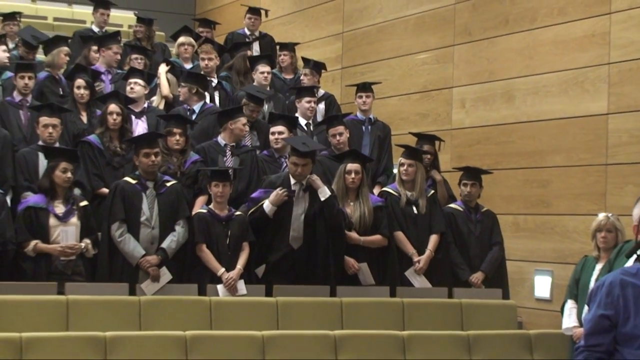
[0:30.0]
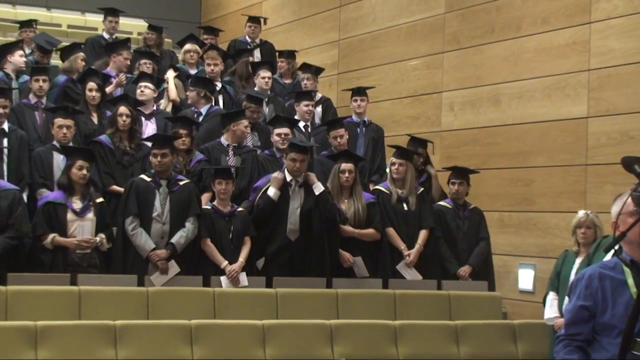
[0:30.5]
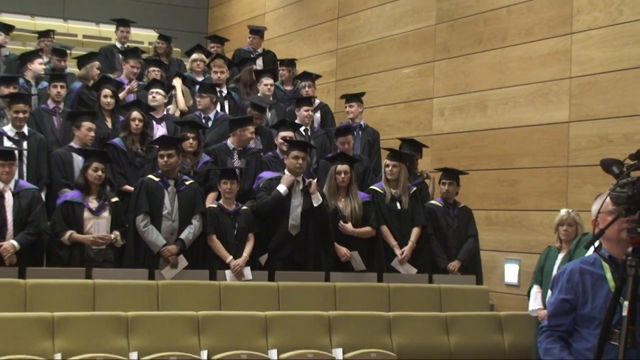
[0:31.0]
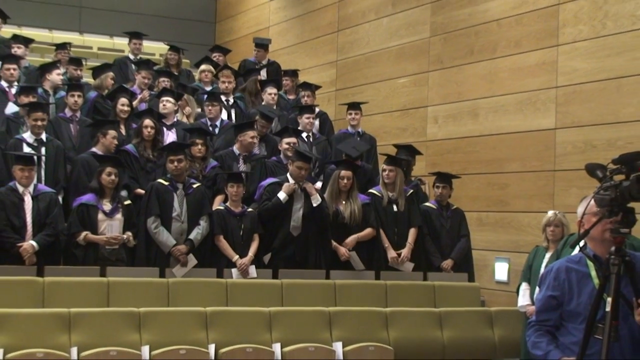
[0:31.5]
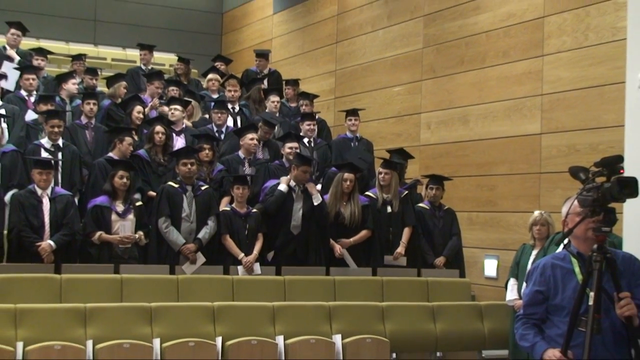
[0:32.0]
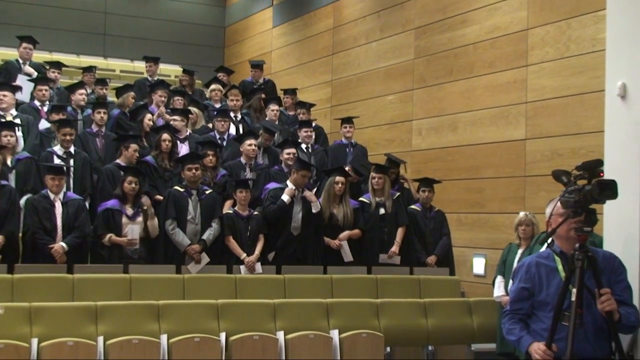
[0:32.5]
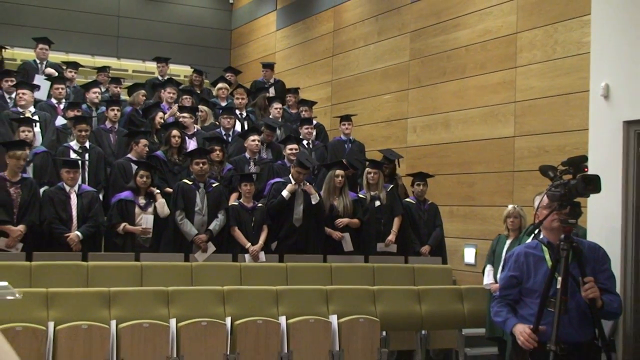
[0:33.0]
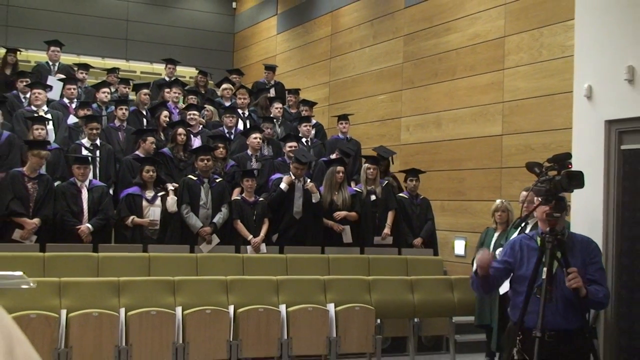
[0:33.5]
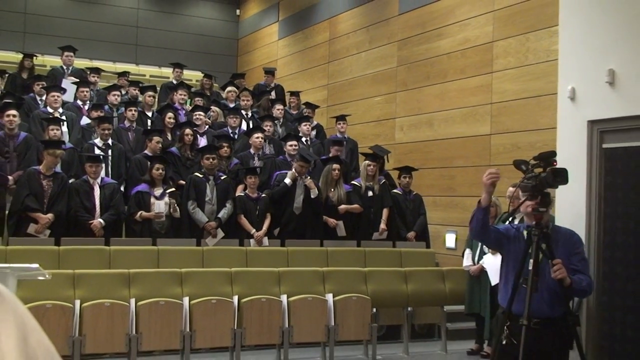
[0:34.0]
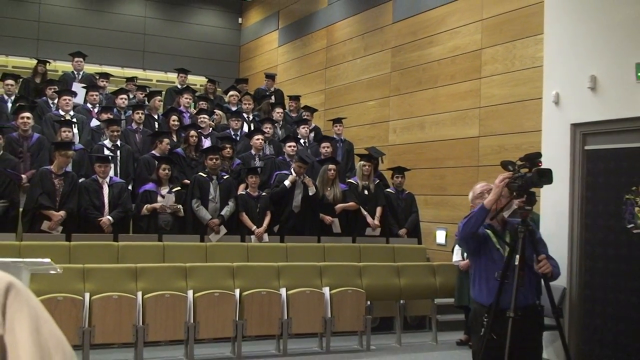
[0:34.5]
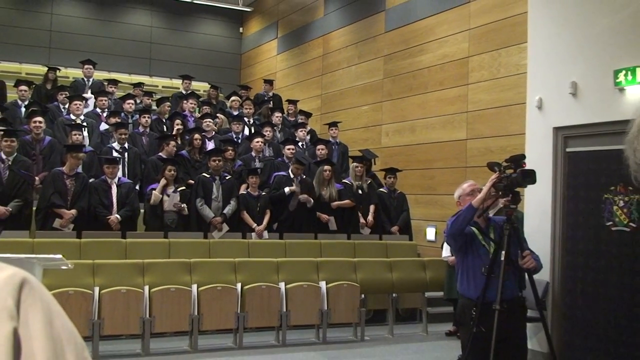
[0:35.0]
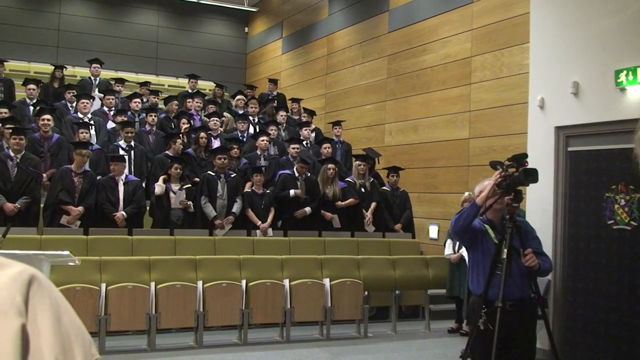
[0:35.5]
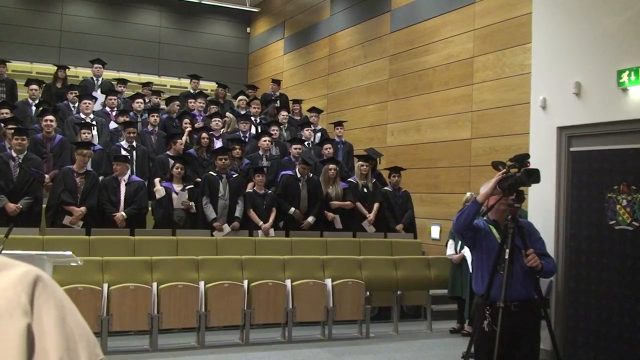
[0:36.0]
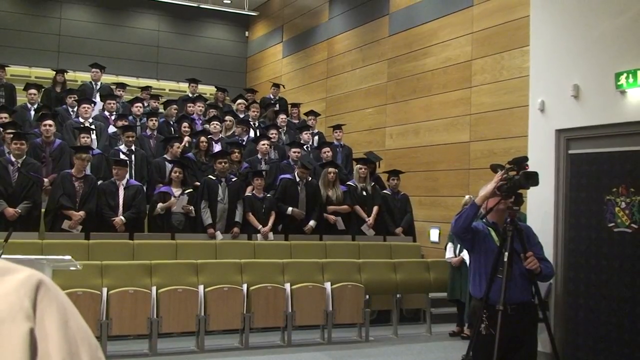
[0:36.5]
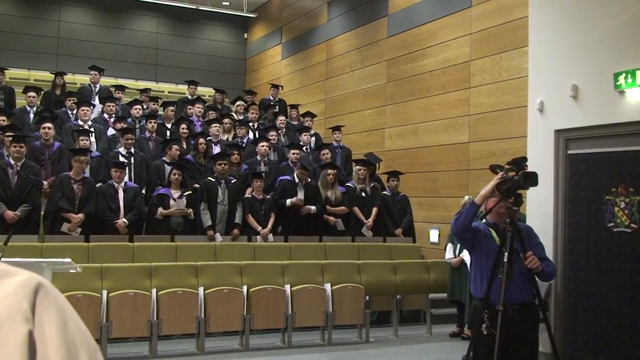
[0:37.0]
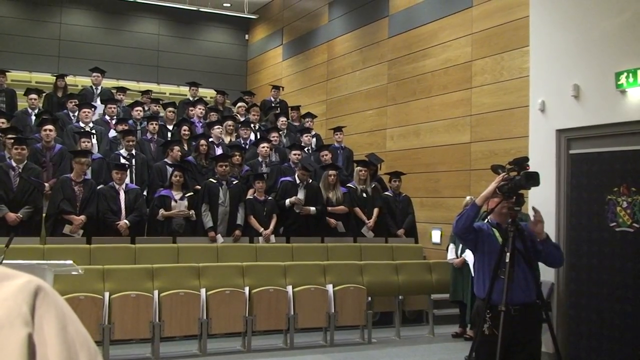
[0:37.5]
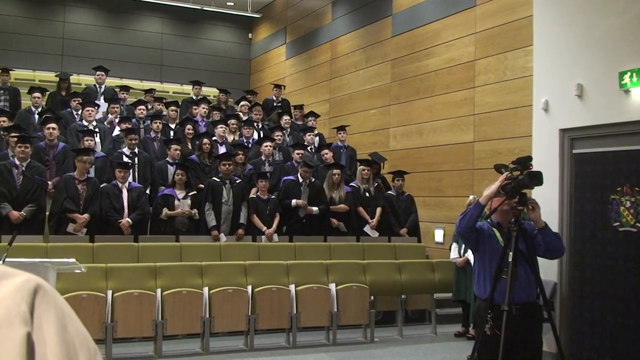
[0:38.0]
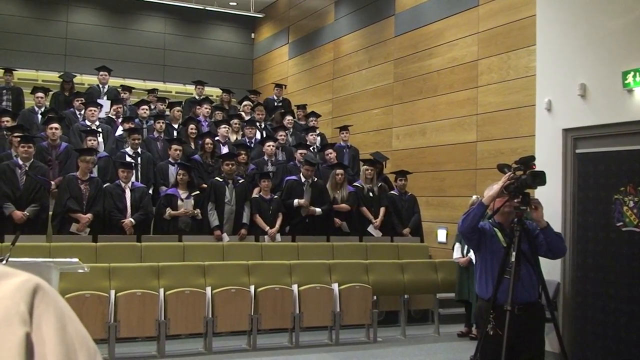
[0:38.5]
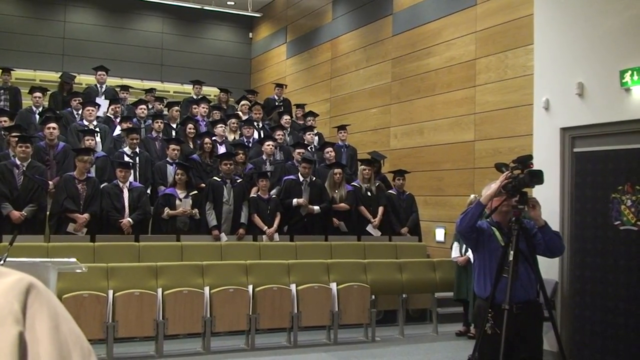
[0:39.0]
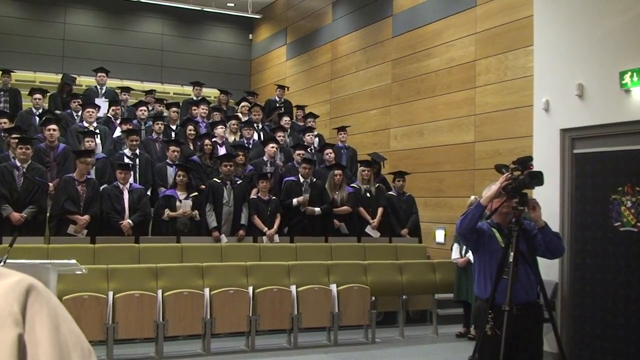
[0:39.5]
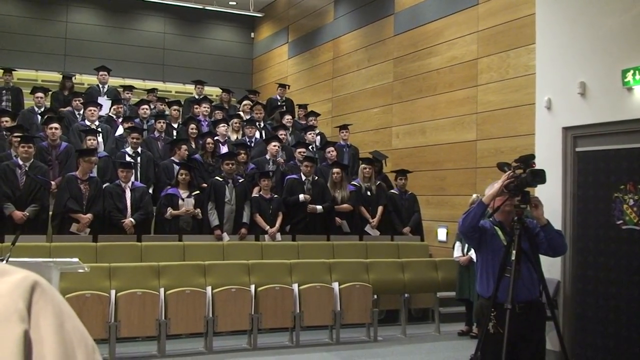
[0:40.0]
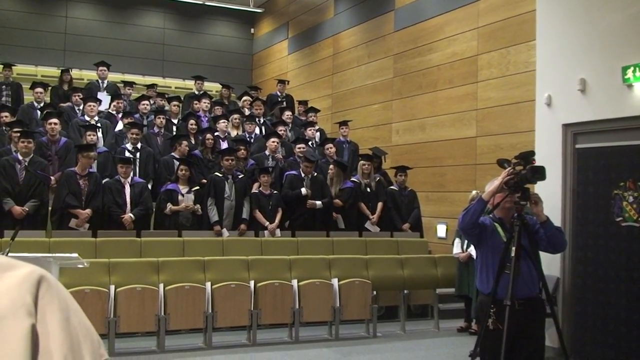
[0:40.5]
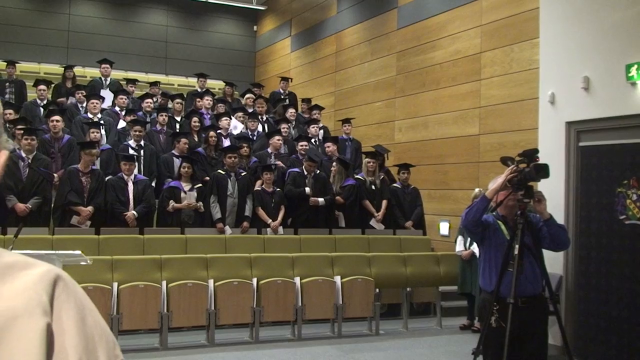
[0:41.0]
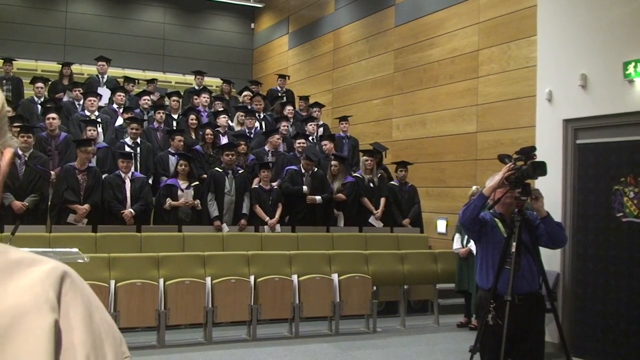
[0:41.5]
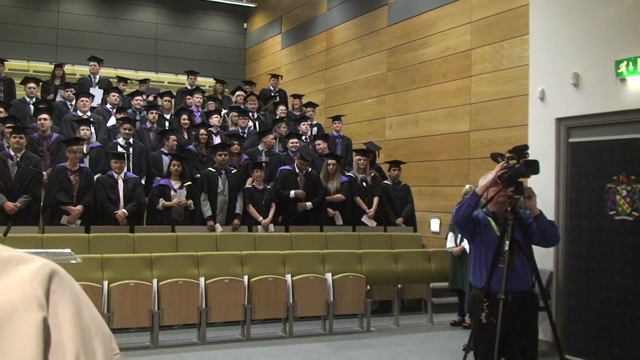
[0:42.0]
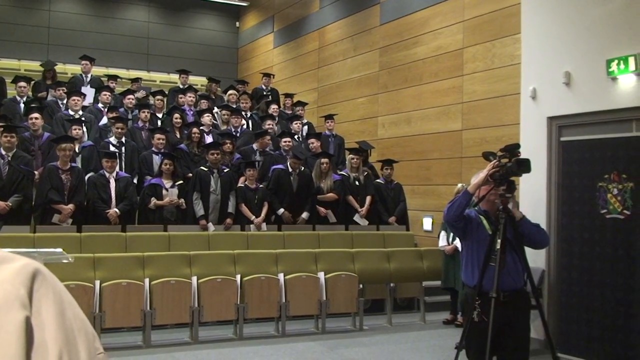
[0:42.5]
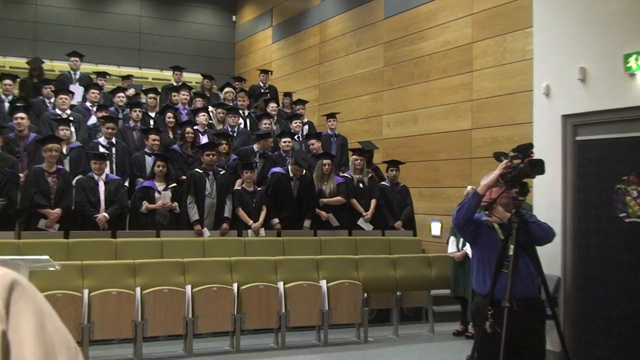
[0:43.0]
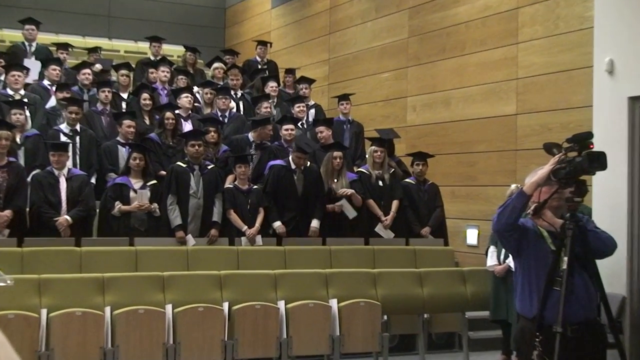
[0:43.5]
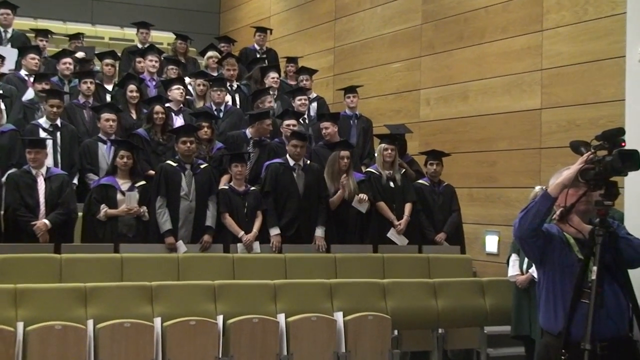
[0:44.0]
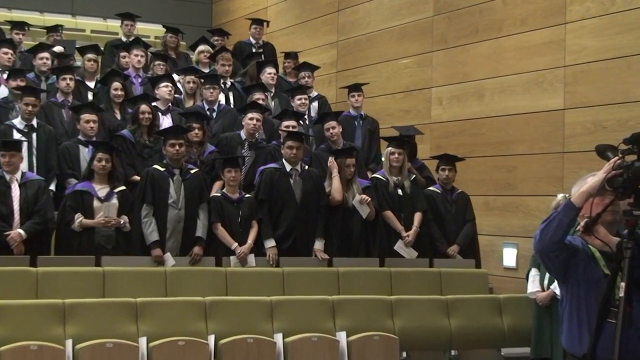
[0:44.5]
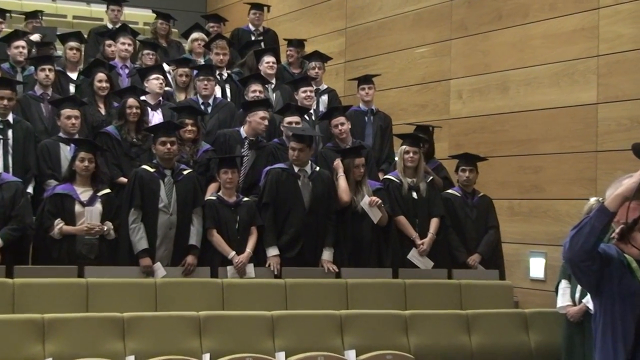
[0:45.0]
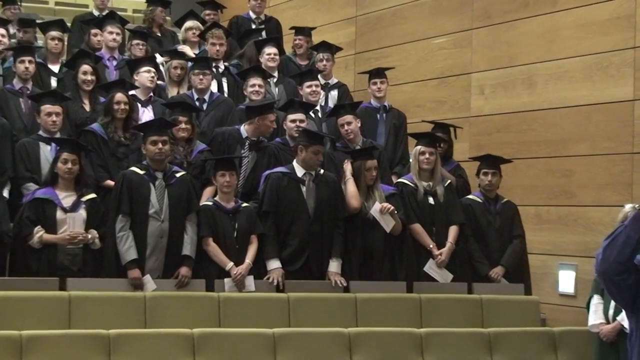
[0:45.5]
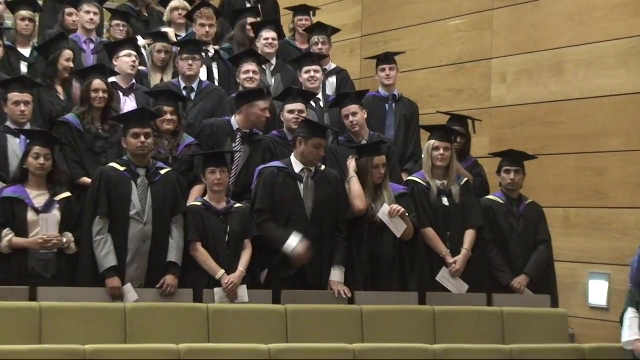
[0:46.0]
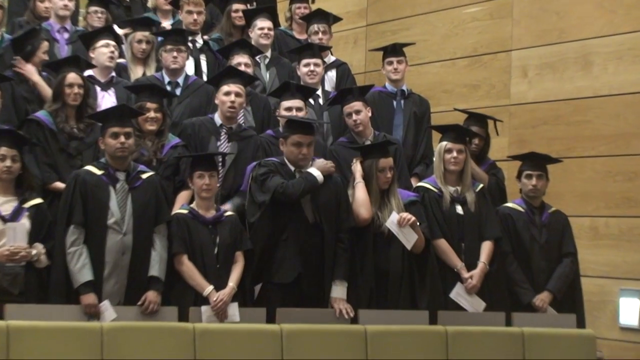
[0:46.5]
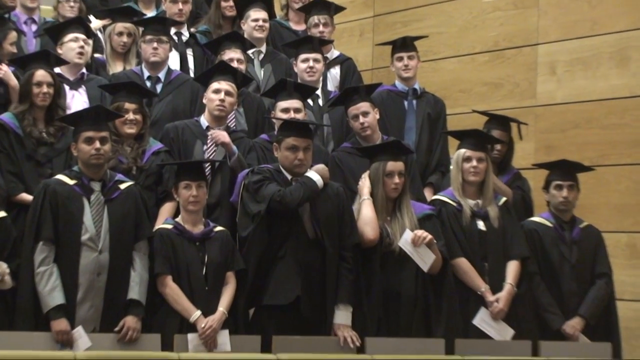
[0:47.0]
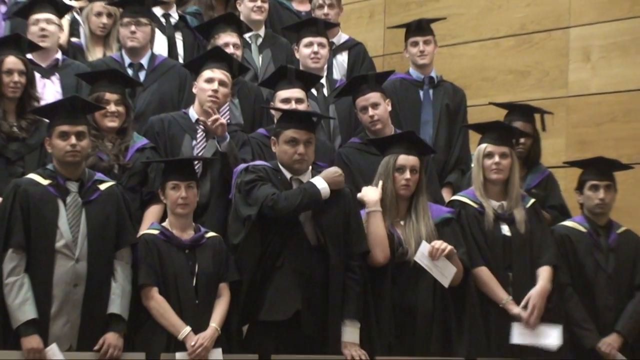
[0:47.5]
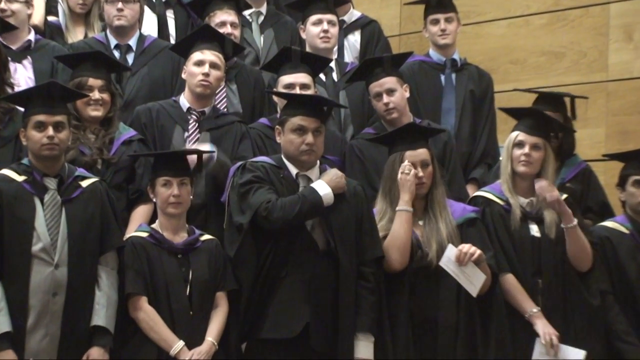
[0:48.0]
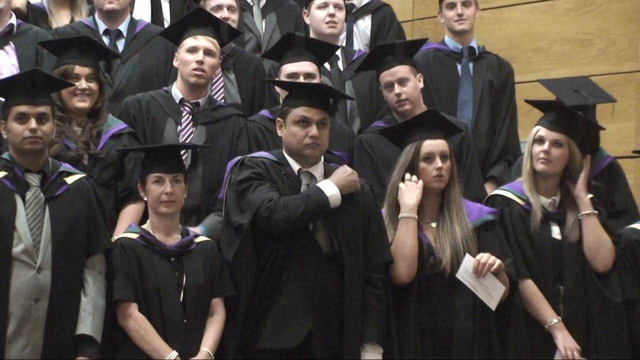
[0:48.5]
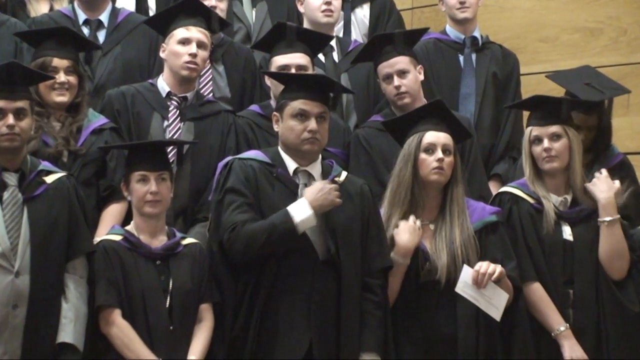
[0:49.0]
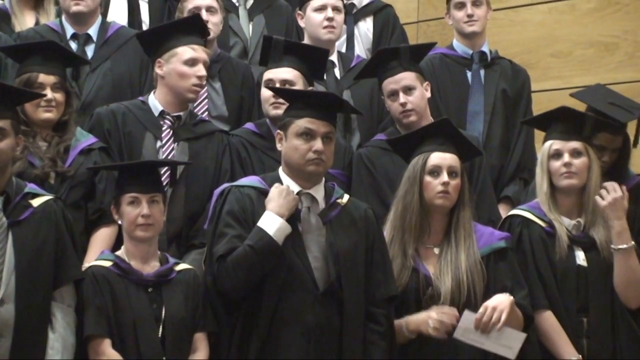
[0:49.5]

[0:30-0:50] The camera zooms out, still showing the same group of graduates. A couple of them have taken off their graduation caps. The videographer in the front appears to have the camera pointed the other way rather than at the graduates. There is probably a stage or something in front of the camera's view. A black stage door has a logo with some yellow and green on it, probably the school's logo. A green exit sign shows a small white stick figure running to the right. Some of the graduates are folding the programs in their hands. Then they all suddenly become very still, as if someone is addressing them or they know their photo is being taken. Some look very solemn, others very excited, and a couple look very bored. The camera zooms back in on two young women on the right with long blonde hair. They seem to wear tennis bracelets and multiple rings, and they are playing with their hair. Next to them, a taller man who looks like he is from India is nervously adjusting his stole and his mortarboard.